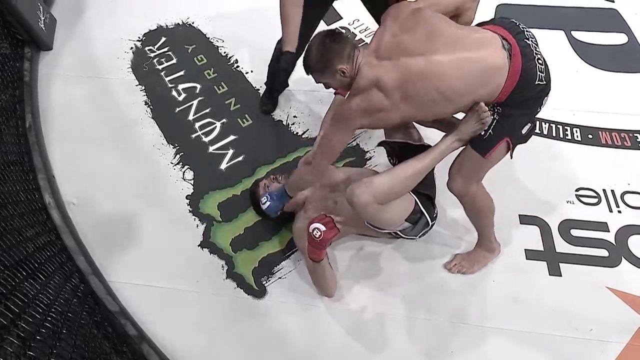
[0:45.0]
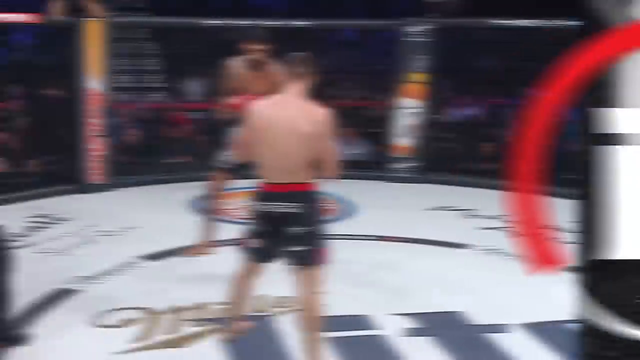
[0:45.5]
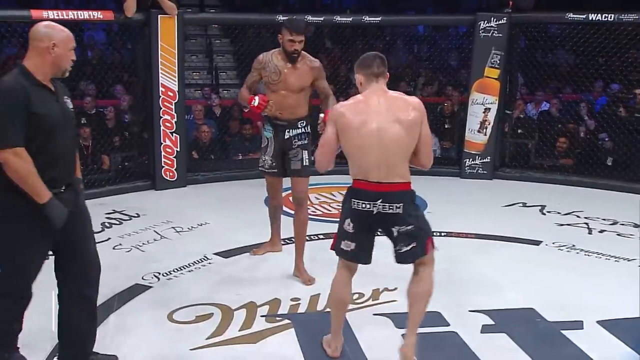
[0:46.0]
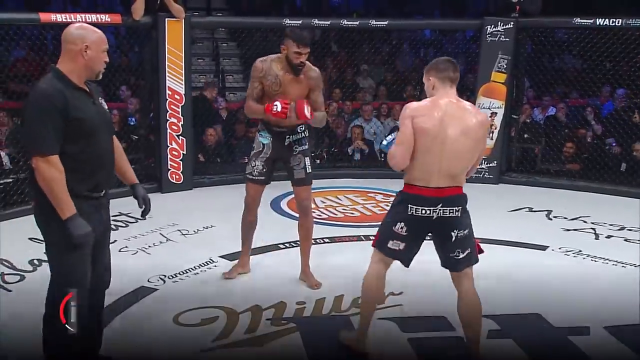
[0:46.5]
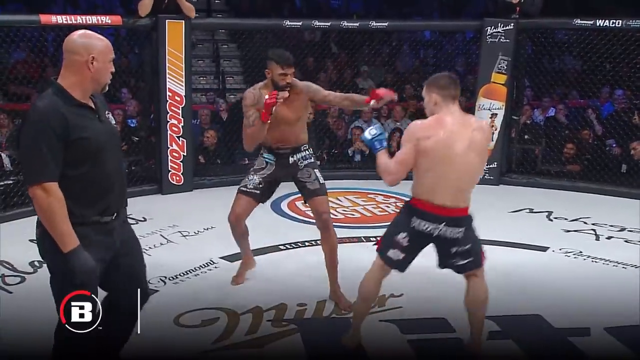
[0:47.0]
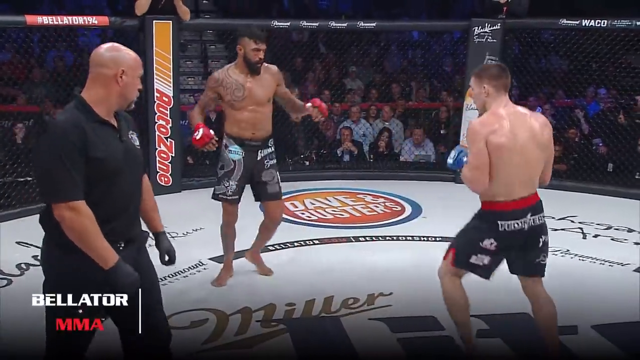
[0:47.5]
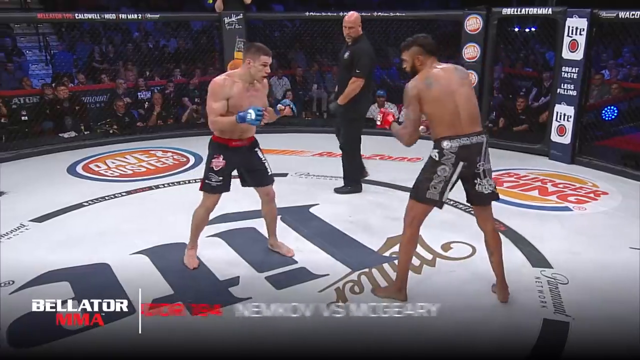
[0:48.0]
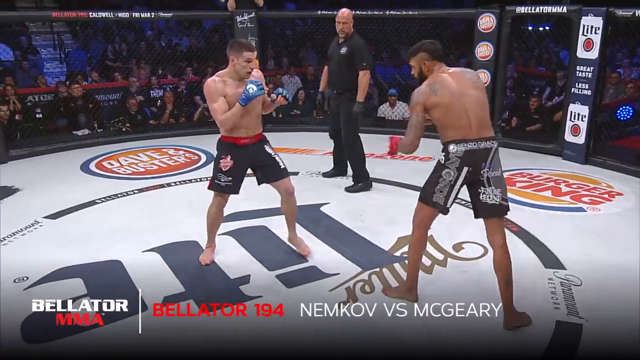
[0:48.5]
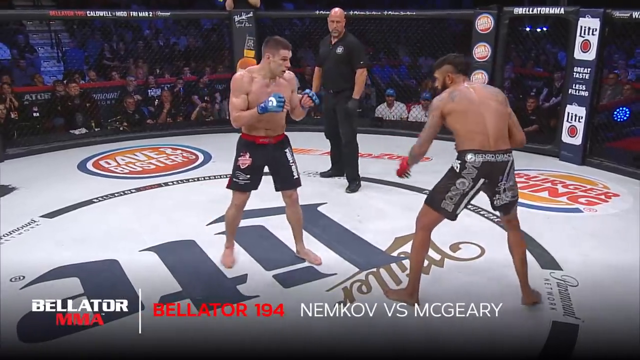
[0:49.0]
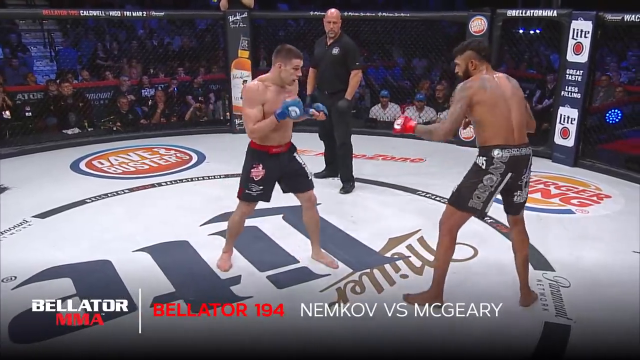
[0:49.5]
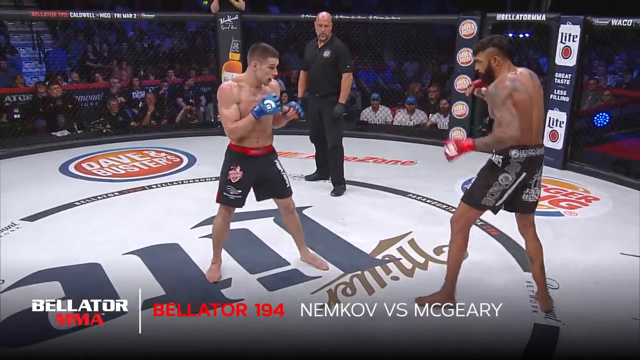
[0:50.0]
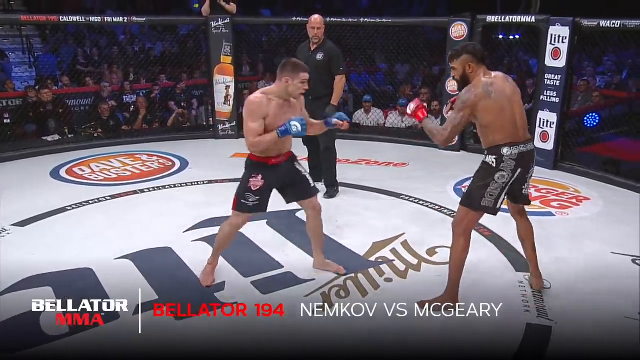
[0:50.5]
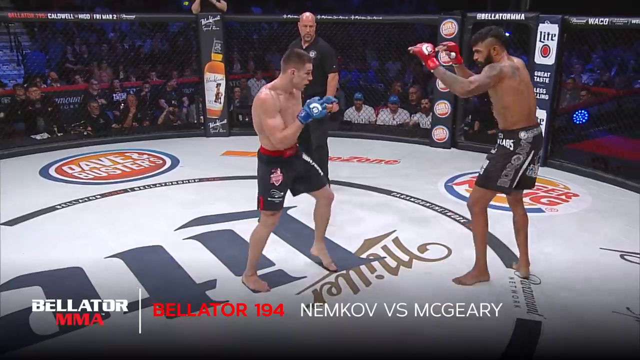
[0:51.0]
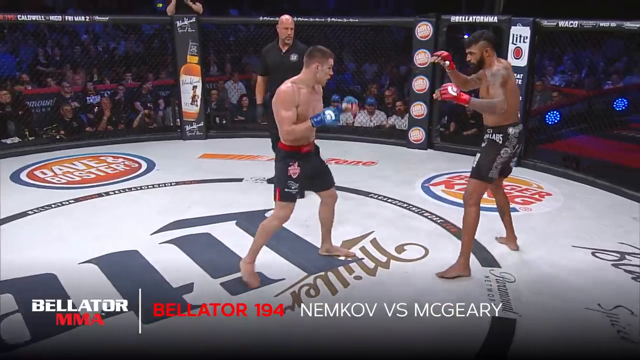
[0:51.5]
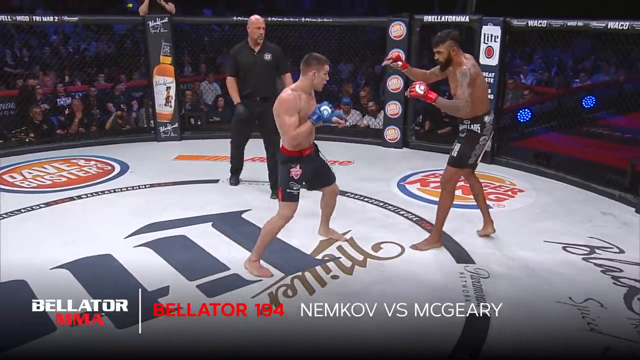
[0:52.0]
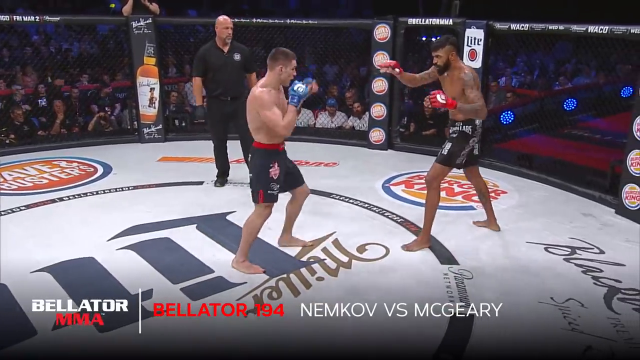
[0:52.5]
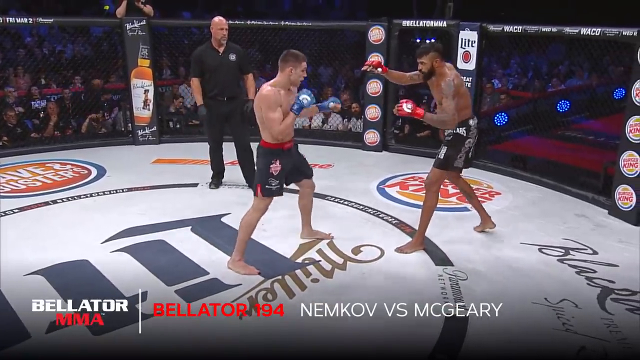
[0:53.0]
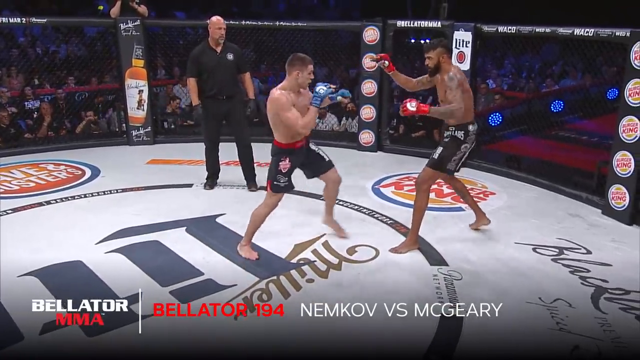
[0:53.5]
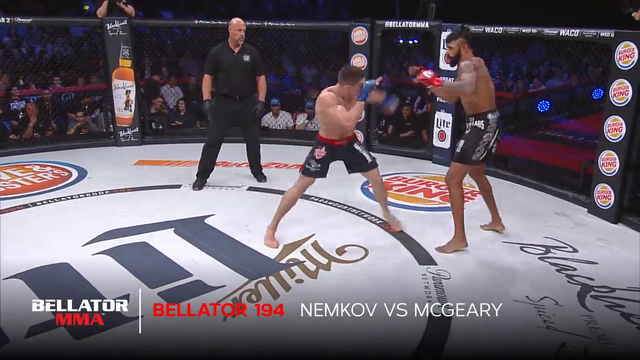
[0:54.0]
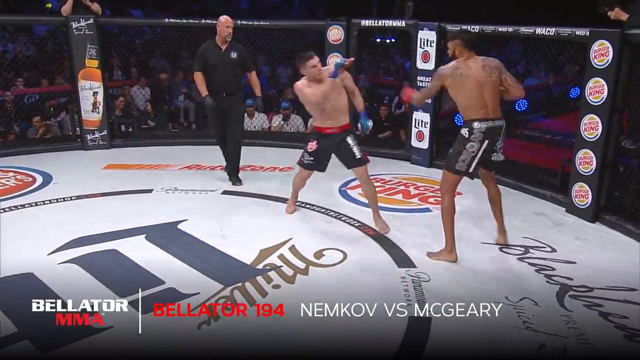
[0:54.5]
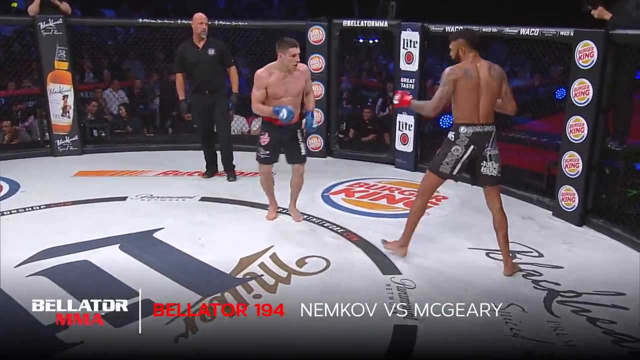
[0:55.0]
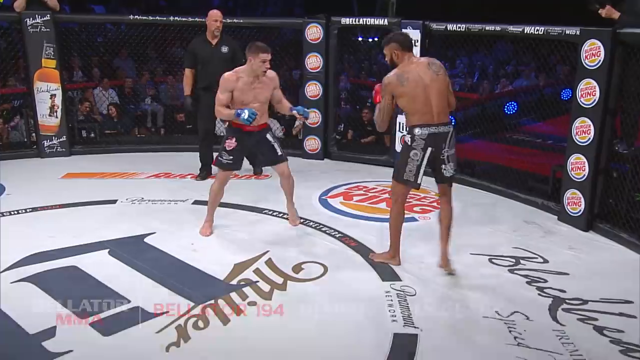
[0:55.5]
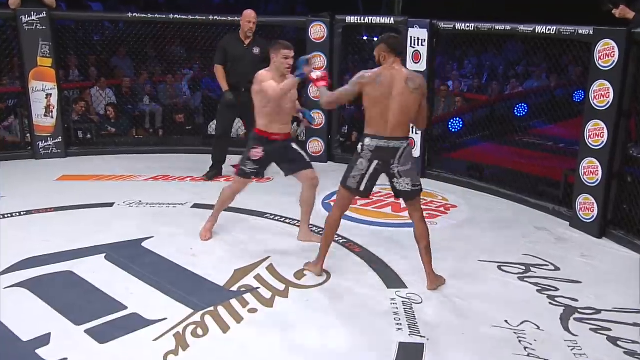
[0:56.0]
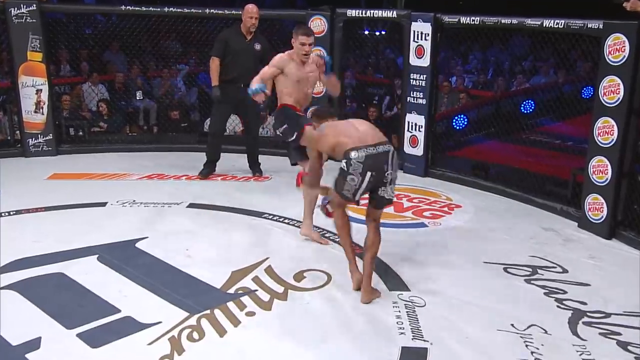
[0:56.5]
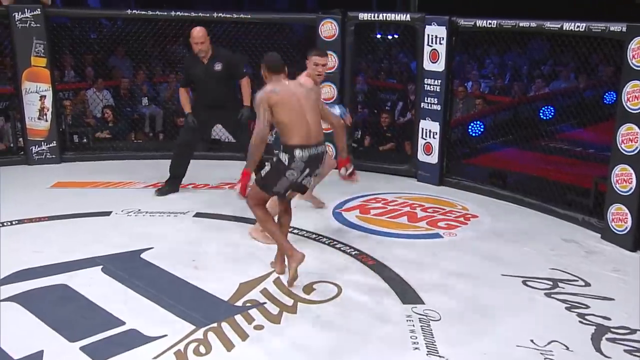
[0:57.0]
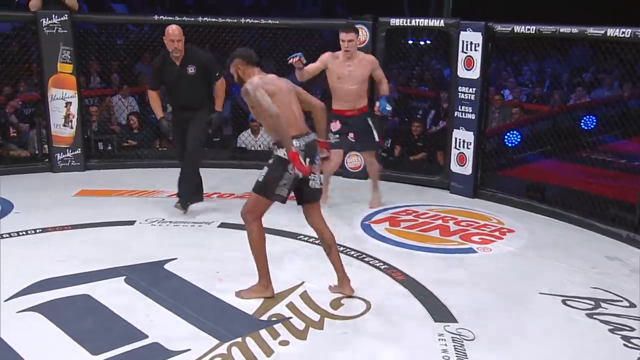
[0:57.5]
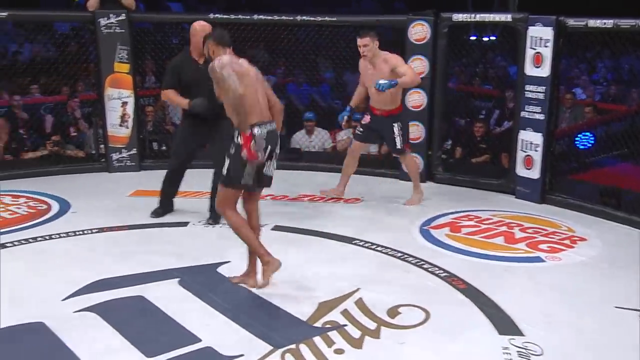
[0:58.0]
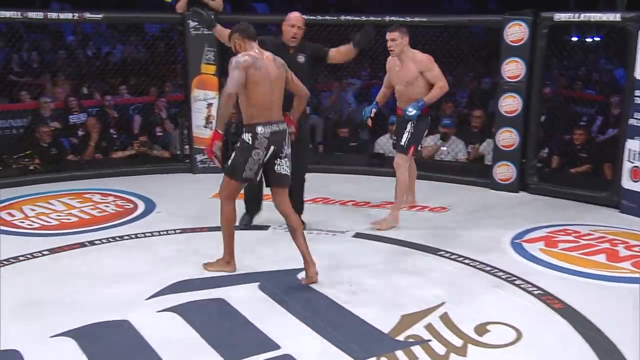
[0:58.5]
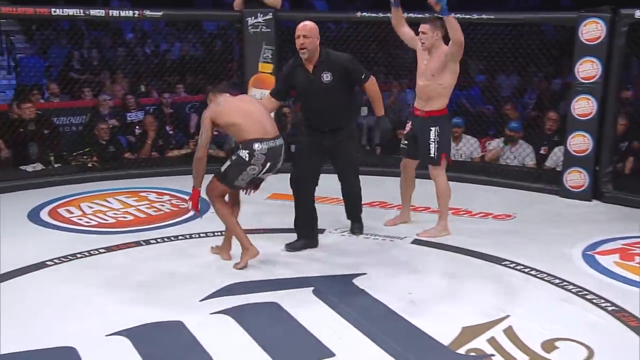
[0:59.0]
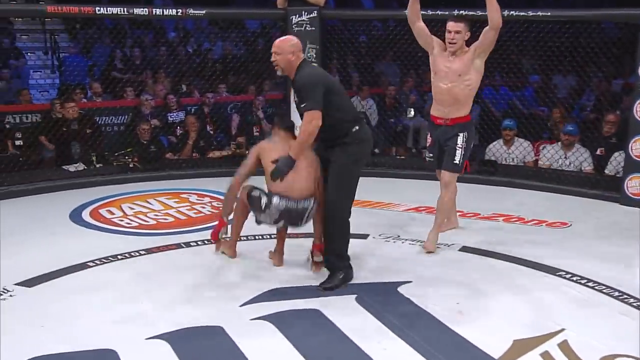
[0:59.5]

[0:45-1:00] The footage returns from slow motion to regular speed, apparently showing Nemkov vs. McGeary. The two test each other, throwing kicks and punches. Nemkov, in blue gloves, throws a couple of rights and blocks a left from the other fighter. He then lands a right kick to the other fighter's knee; the man staggers and falls to the ground as the referee puts up his arms and calls the fight. The kick looks like it might have broken the man's leg, and his knee appears badly hurt.